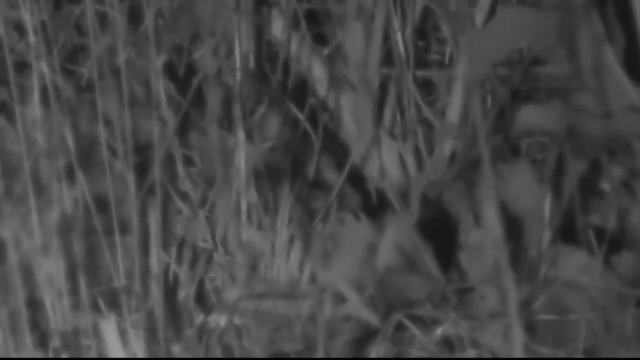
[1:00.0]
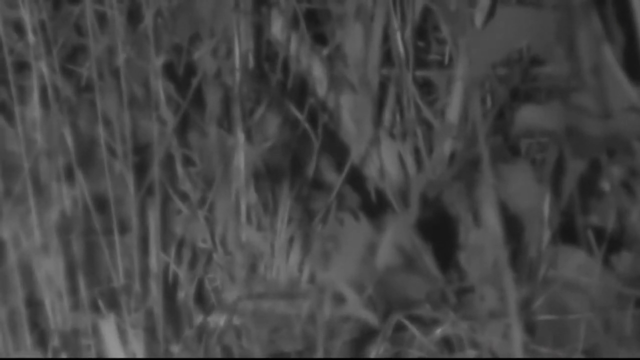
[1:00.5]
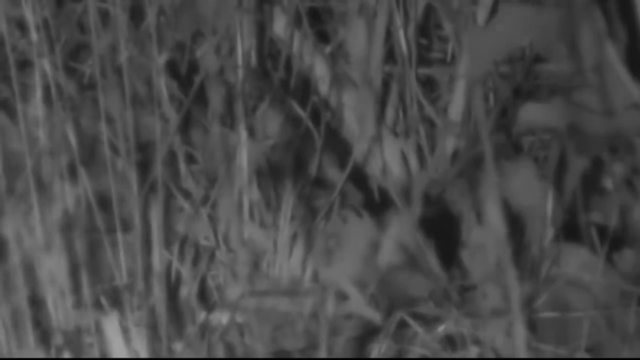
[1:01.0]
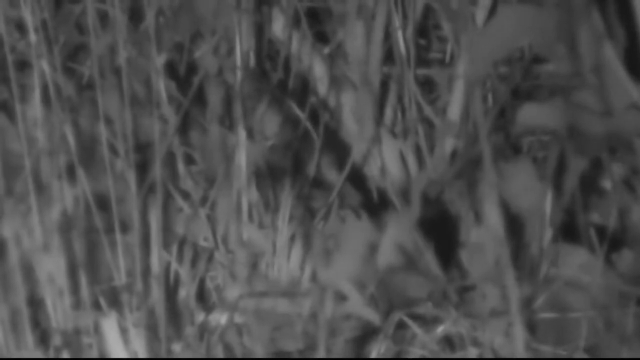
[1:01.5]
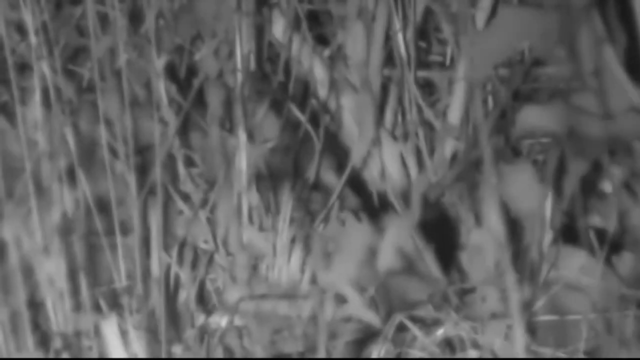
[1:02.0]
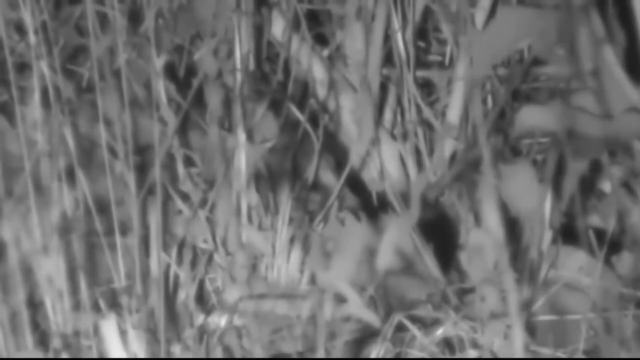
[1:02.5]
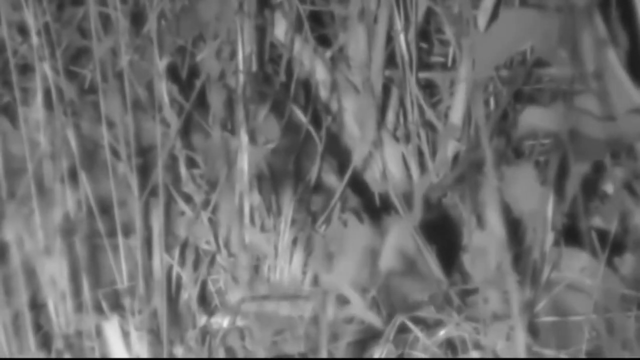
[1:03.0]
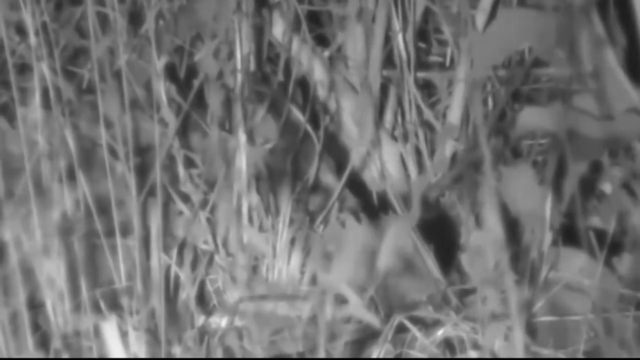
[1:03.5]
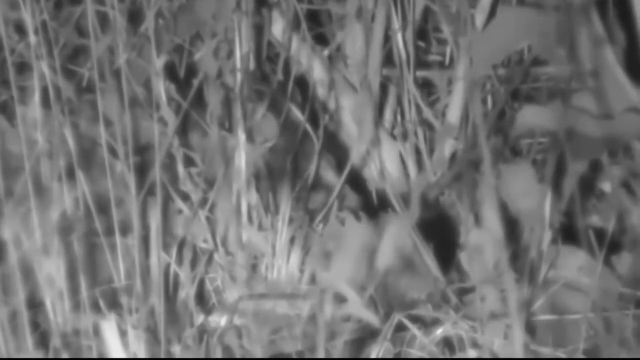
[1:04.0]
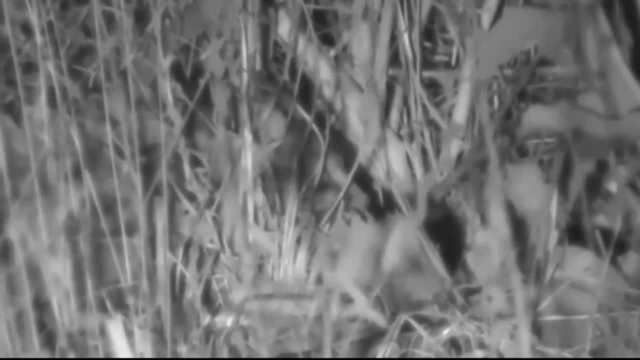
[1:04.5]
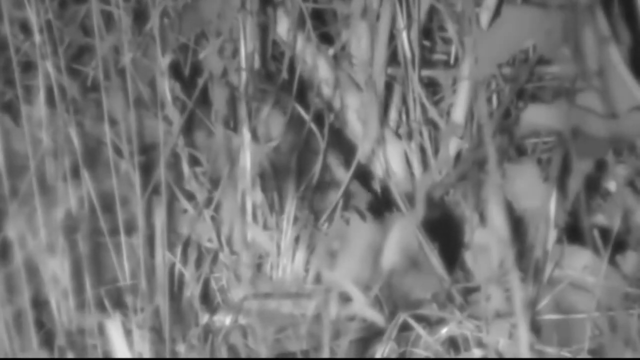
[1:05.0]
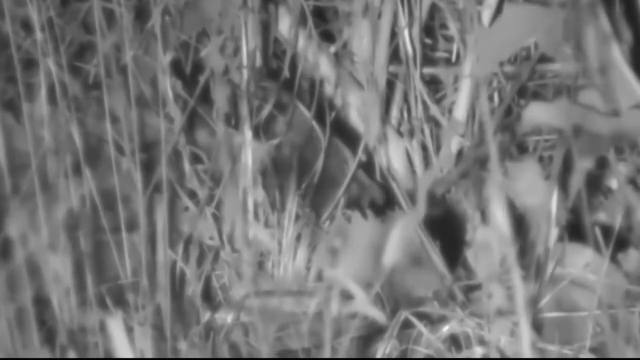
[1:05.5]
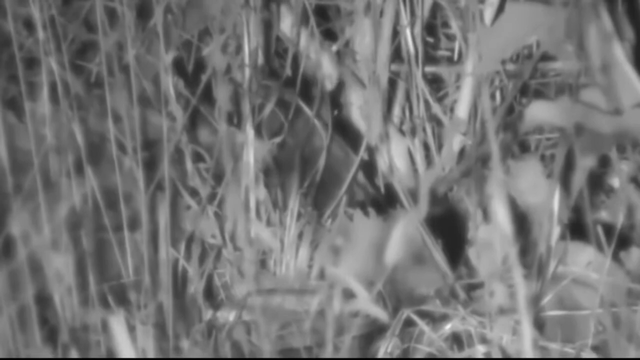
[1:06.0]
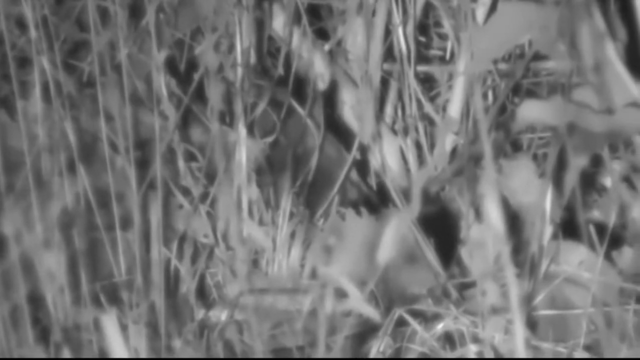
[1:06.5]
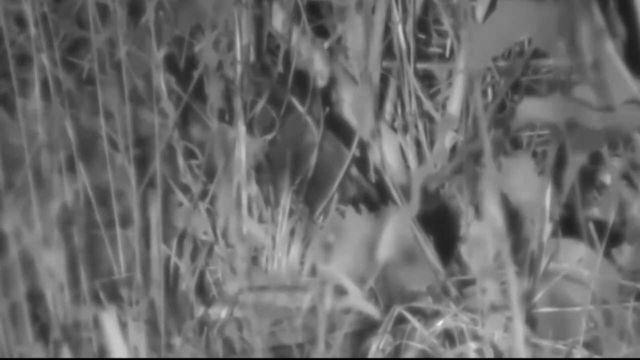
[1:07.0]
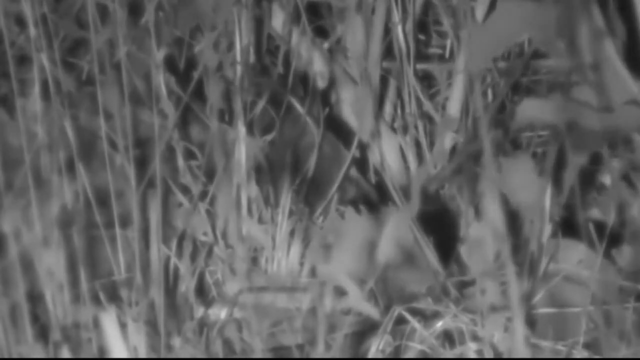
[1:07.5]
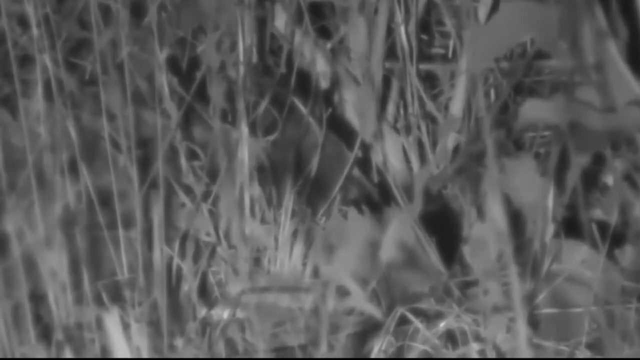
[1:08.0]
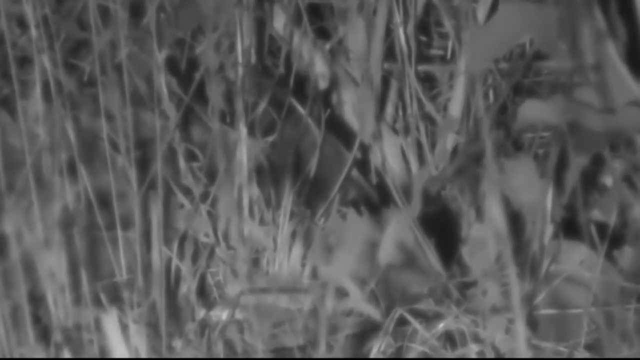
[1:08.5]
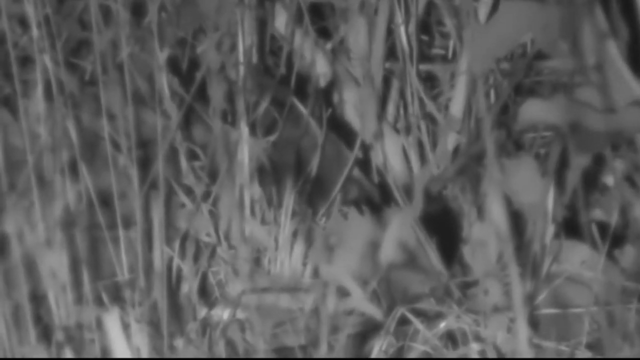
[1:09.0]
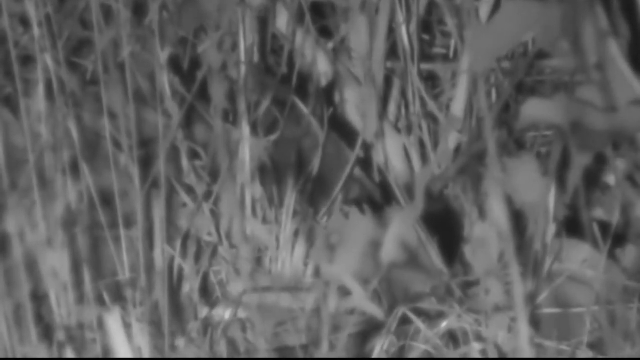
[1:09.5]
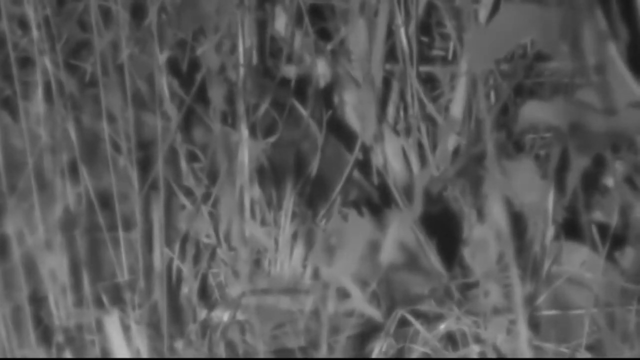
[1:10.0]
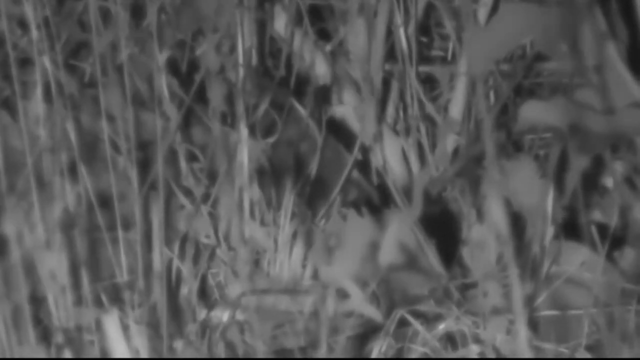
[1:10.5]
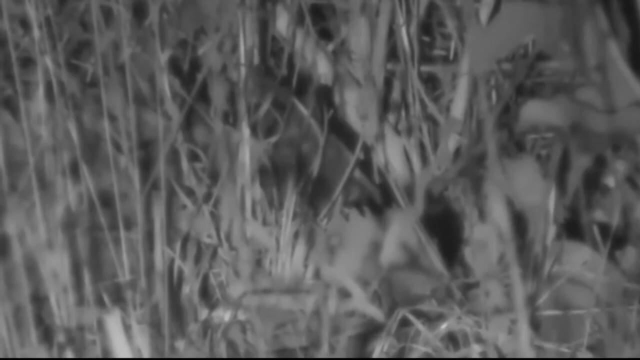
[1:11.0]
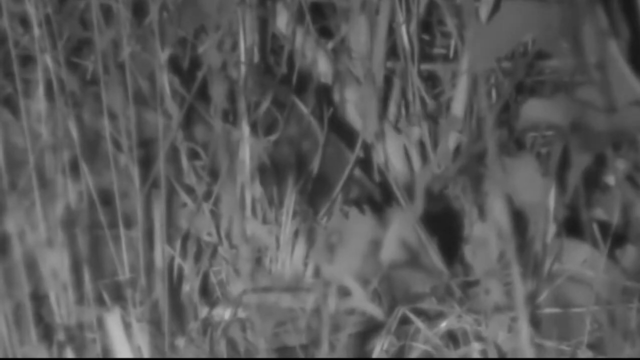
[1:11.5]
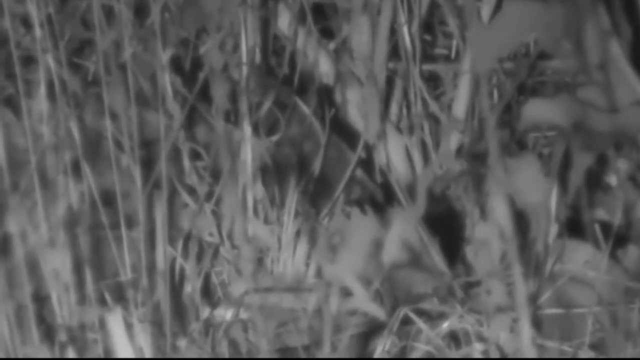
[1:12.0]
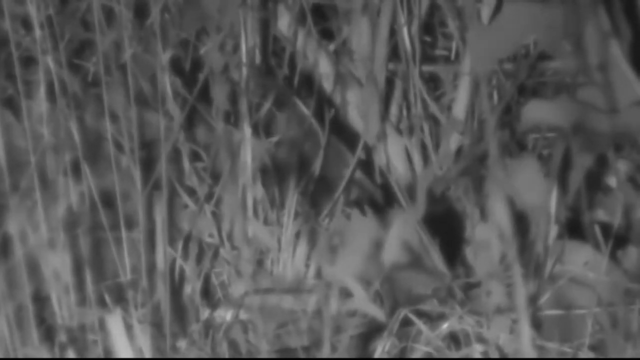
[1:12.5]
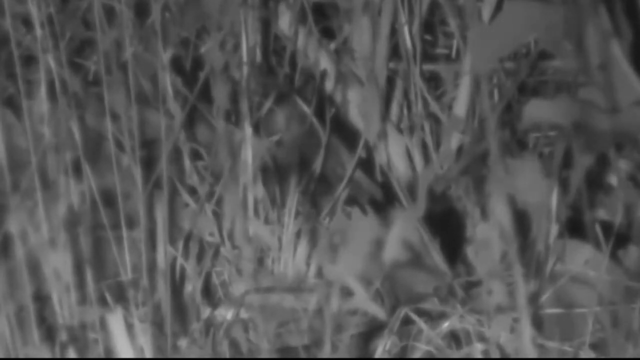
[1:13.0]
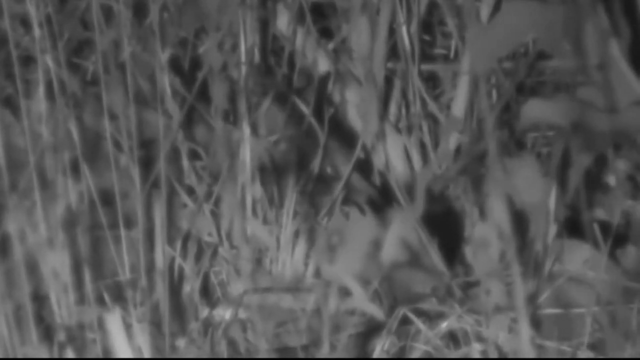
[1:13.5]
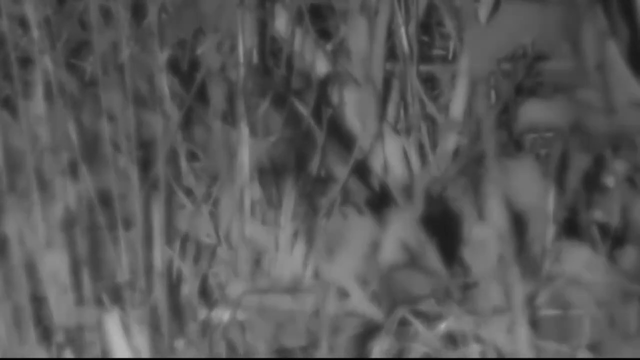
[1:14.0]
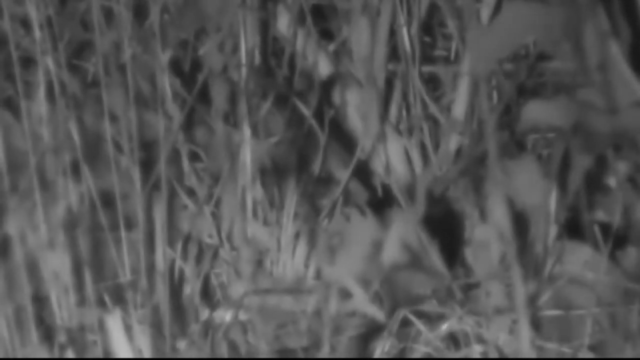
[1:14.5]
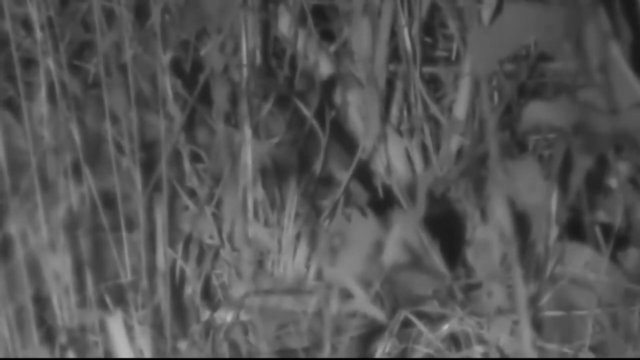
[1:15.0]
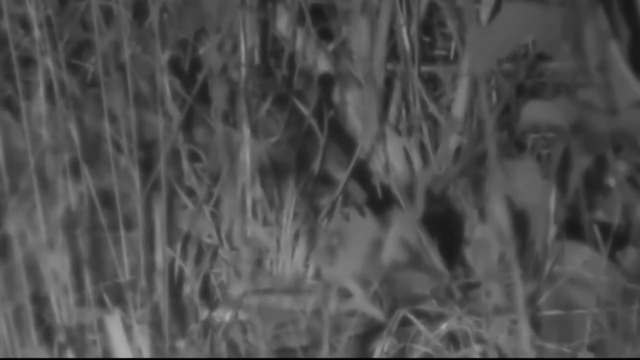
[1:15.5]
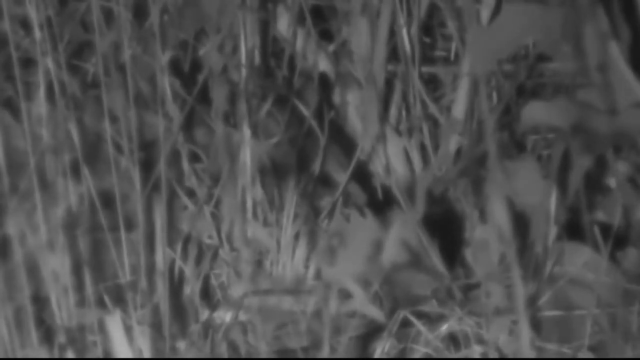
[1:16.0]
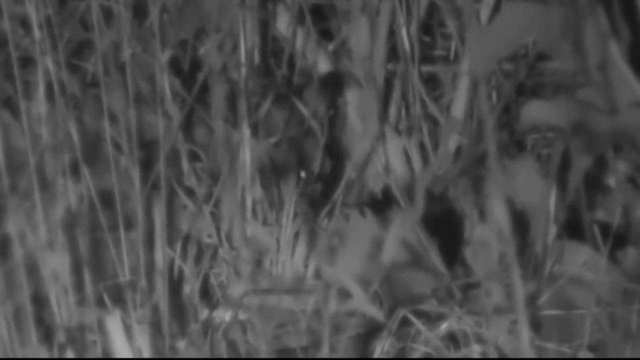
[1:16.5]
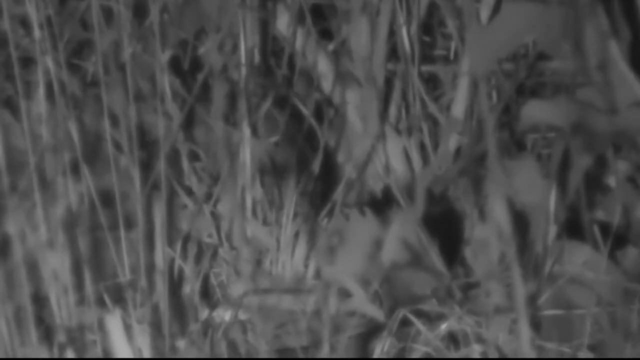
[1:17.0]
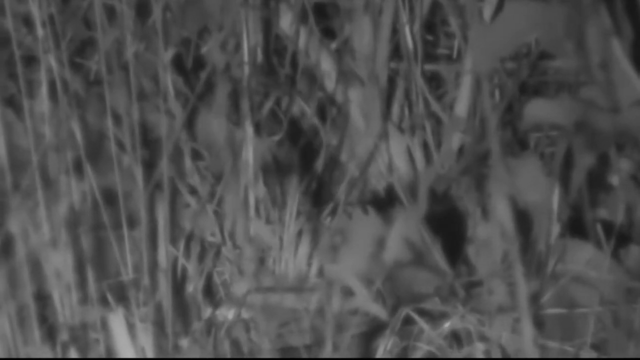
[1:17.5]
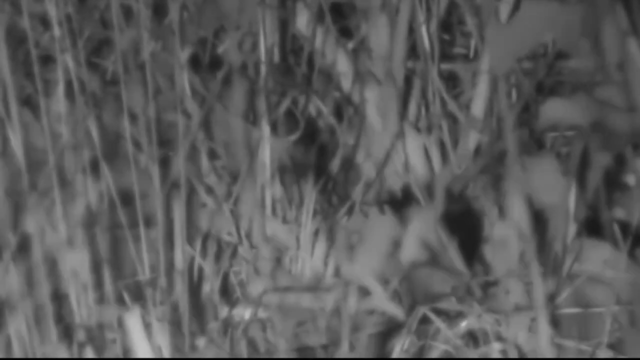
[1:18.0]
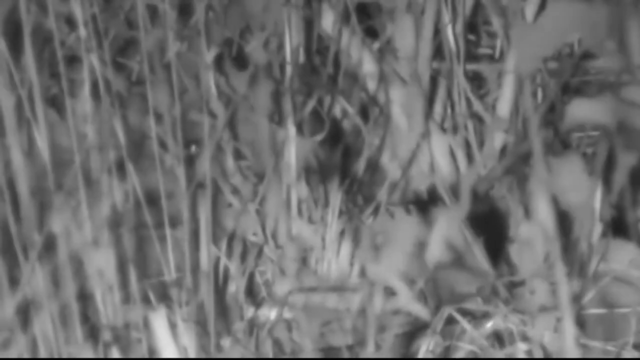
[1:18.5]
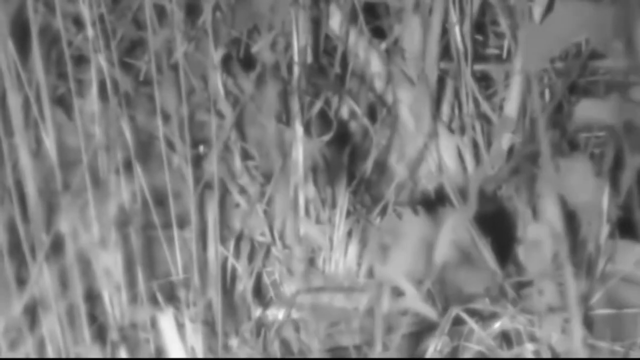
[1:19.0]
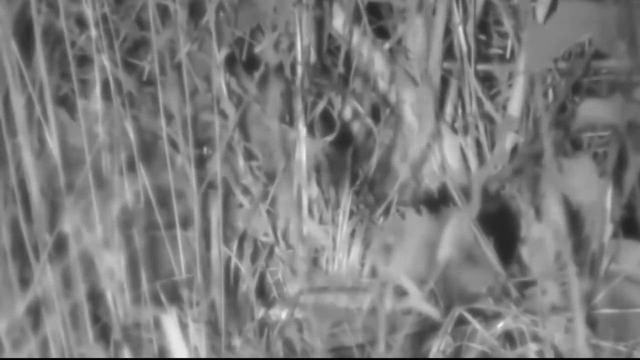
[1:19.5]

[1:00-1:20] The hidden creature turns out to be some kind of cat, dark colored, with its ears and eyes visible, and there seems to be more than one. A little butterfly or bird flies by. The cat's face is clearly visible for a moment, and then it looks like it goes off to the left. It looks like a big black cat, though this is uncertain. On the right is a weird picture of a person with their mouth wide open, and sort of to the right of the center top there is another weird, unidentified face.